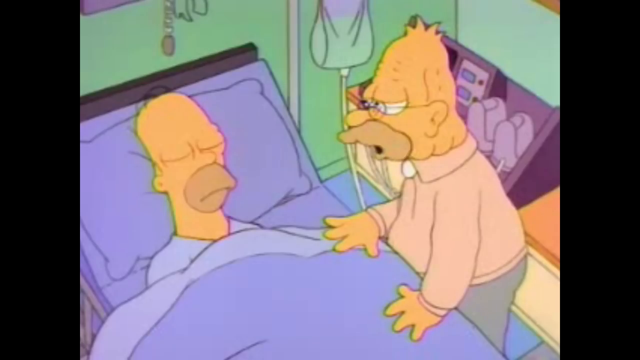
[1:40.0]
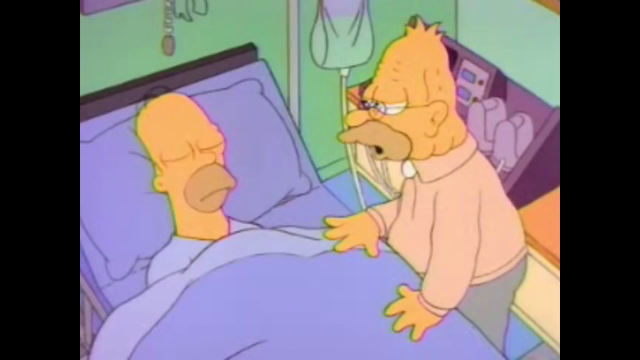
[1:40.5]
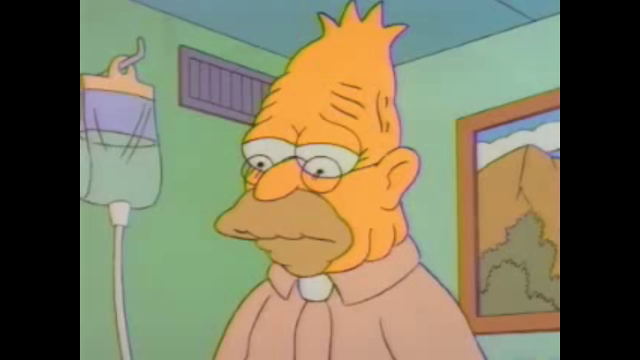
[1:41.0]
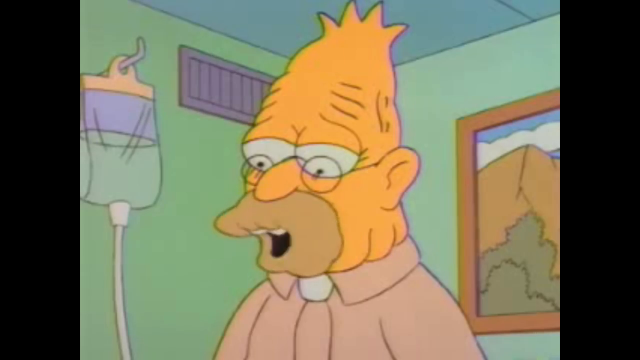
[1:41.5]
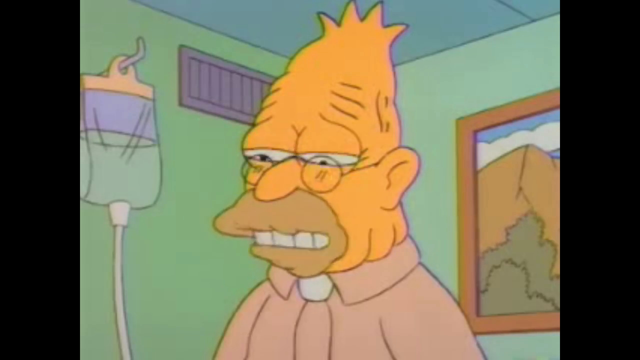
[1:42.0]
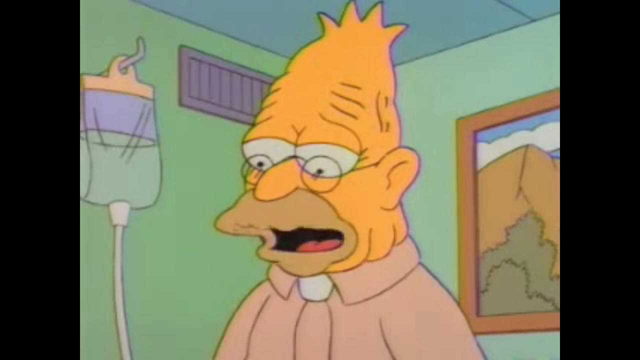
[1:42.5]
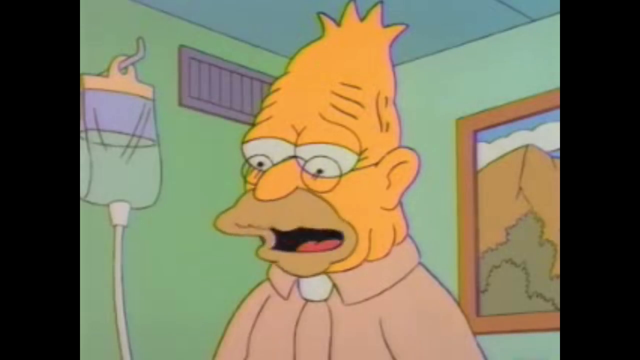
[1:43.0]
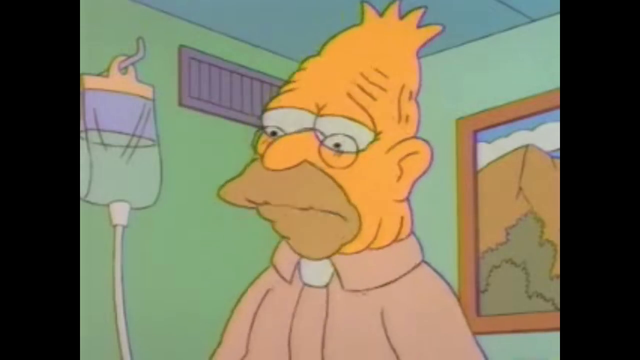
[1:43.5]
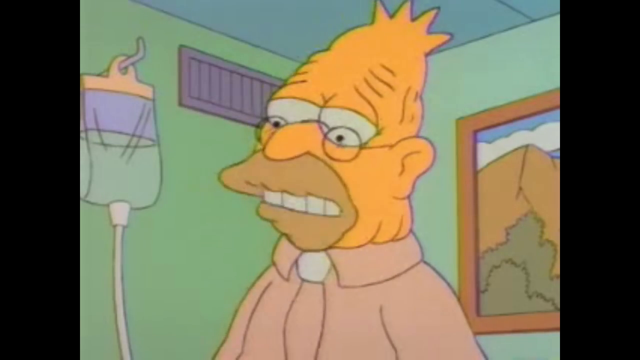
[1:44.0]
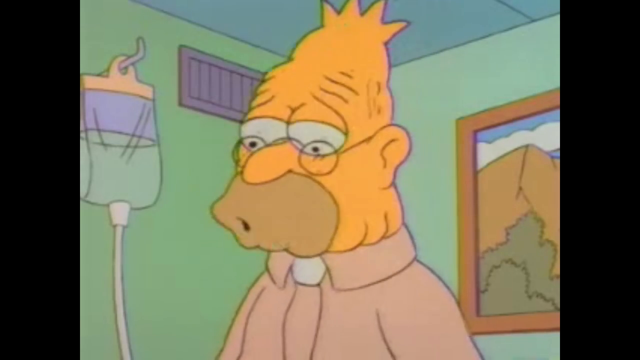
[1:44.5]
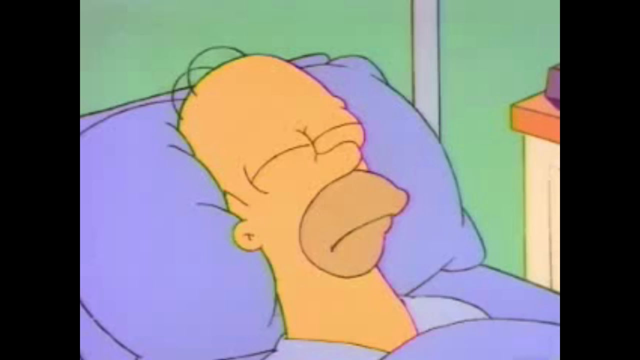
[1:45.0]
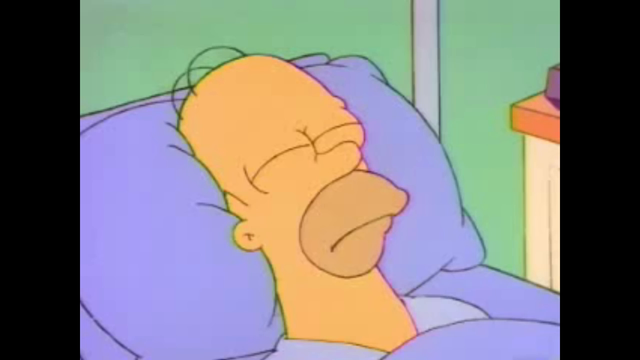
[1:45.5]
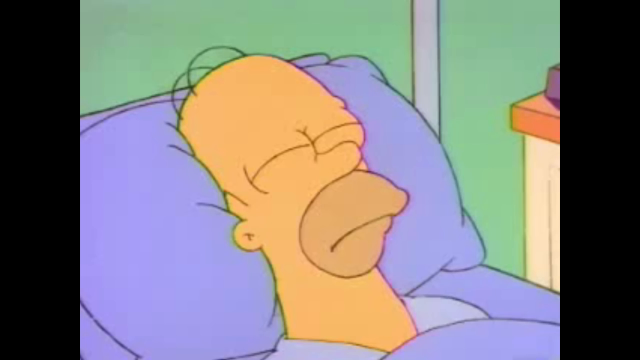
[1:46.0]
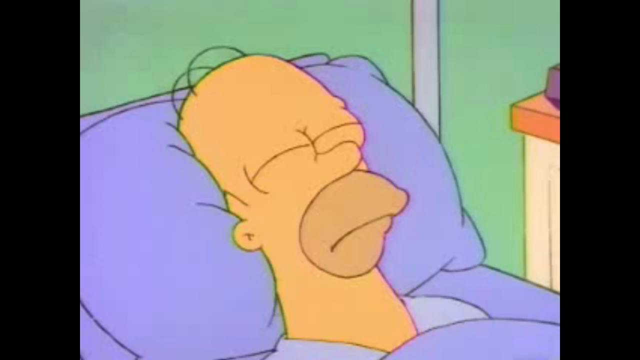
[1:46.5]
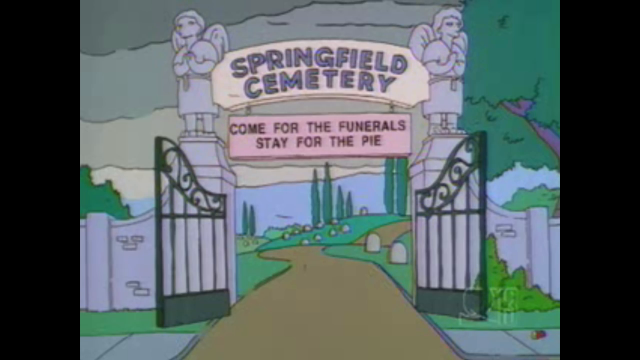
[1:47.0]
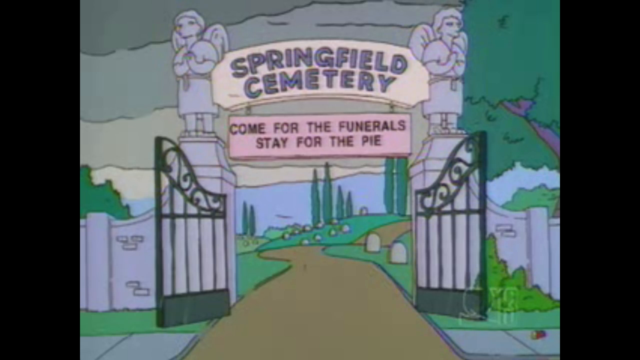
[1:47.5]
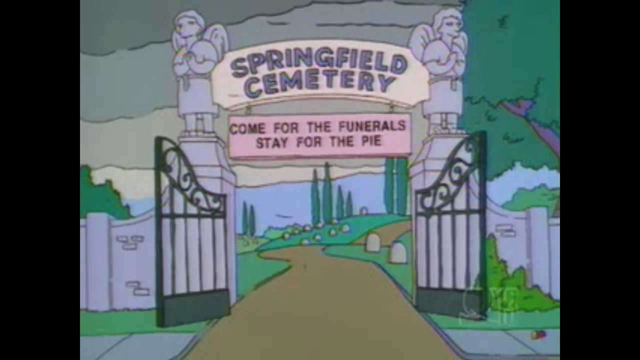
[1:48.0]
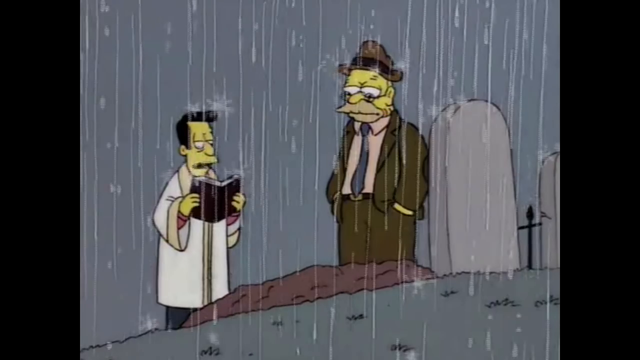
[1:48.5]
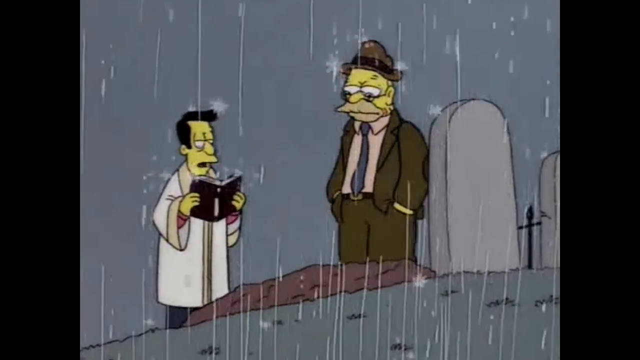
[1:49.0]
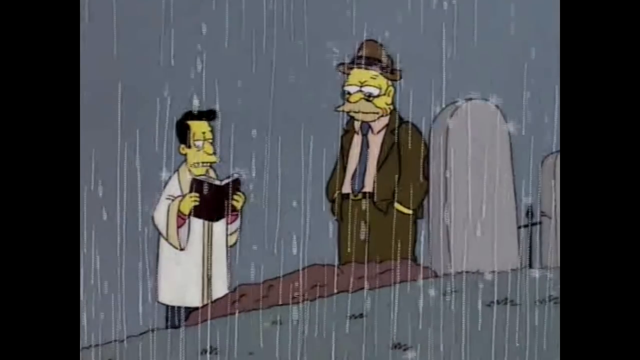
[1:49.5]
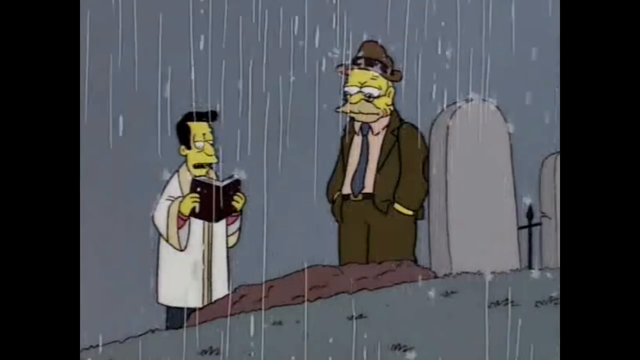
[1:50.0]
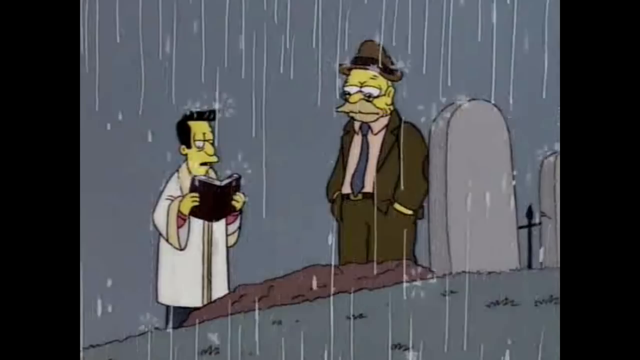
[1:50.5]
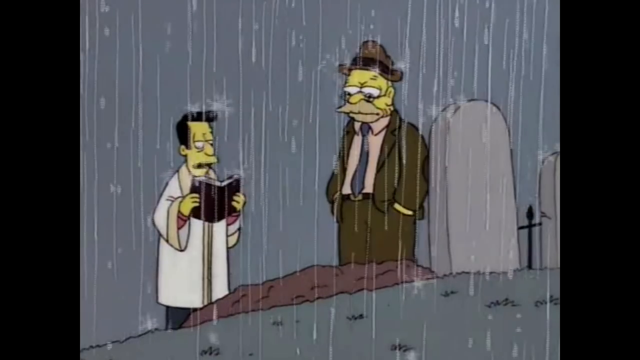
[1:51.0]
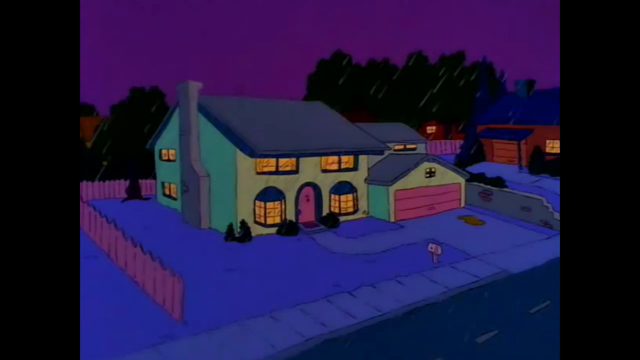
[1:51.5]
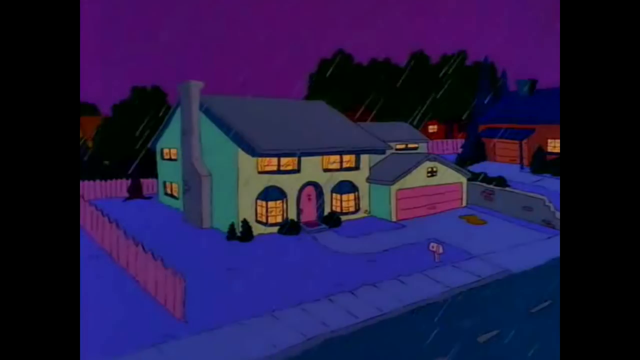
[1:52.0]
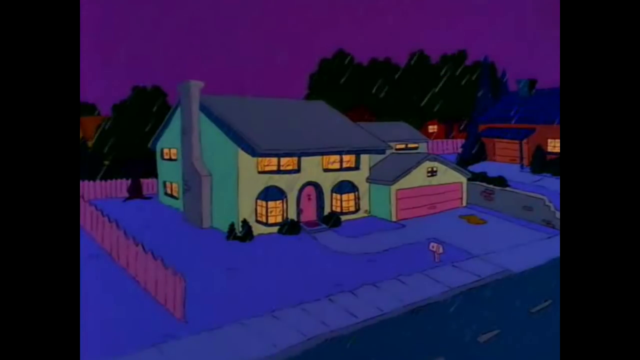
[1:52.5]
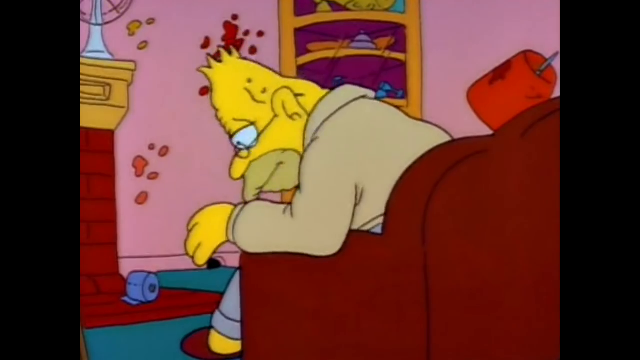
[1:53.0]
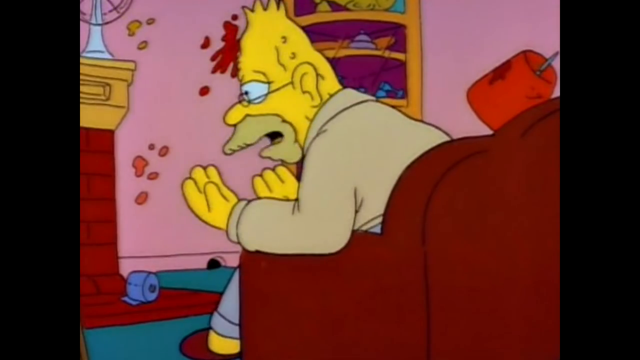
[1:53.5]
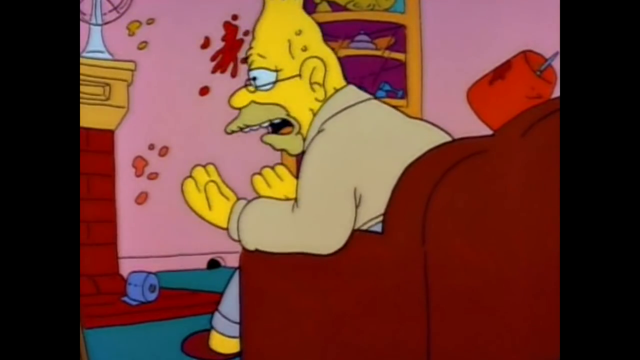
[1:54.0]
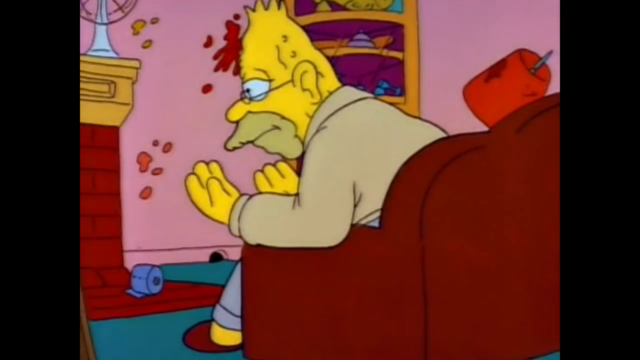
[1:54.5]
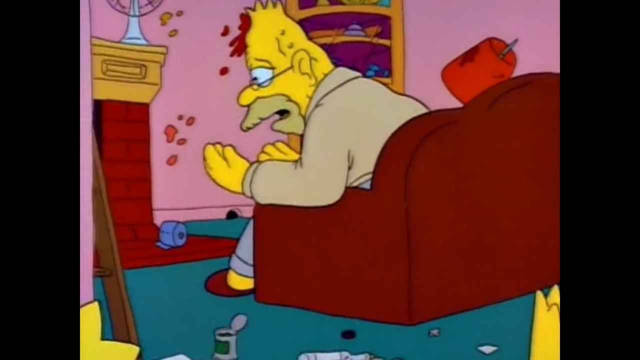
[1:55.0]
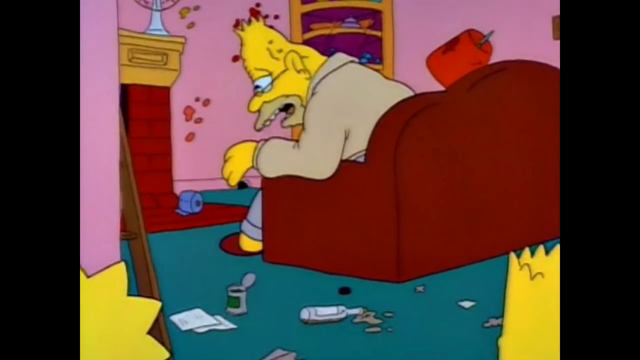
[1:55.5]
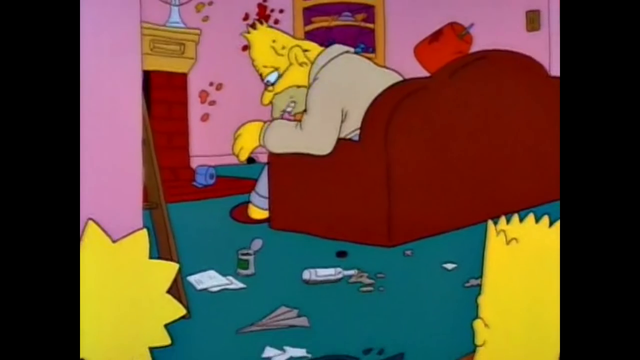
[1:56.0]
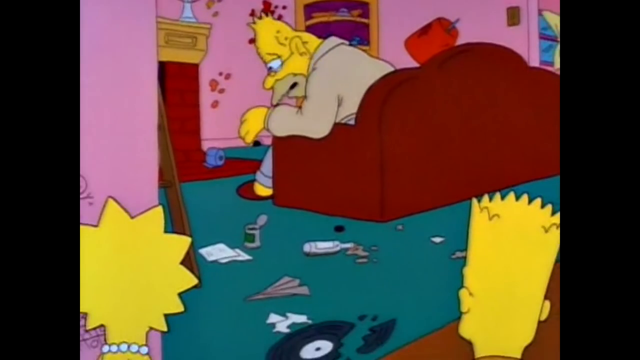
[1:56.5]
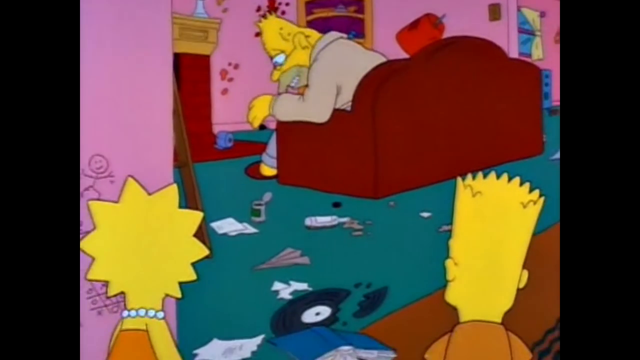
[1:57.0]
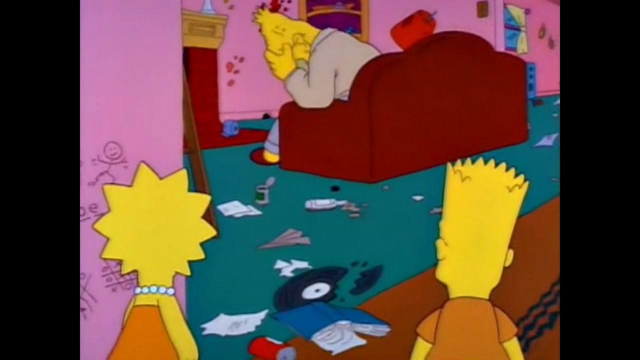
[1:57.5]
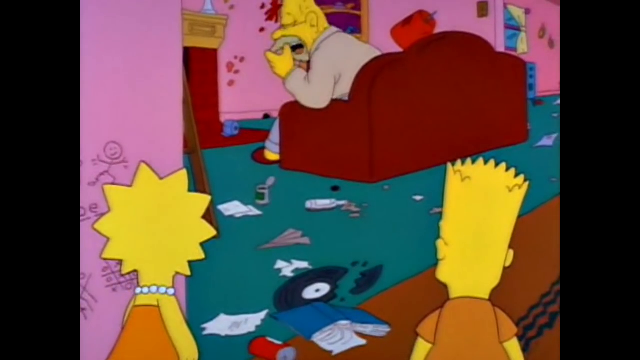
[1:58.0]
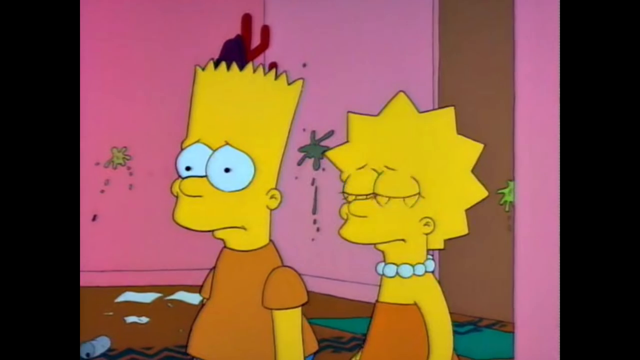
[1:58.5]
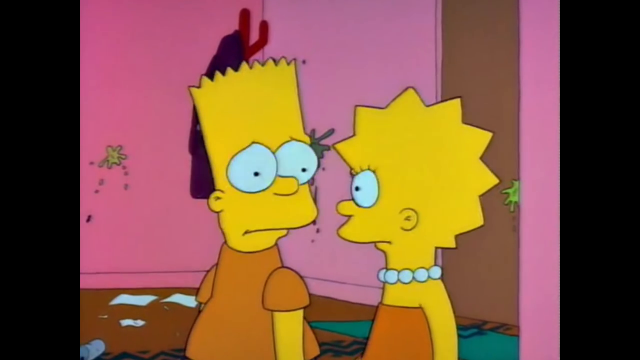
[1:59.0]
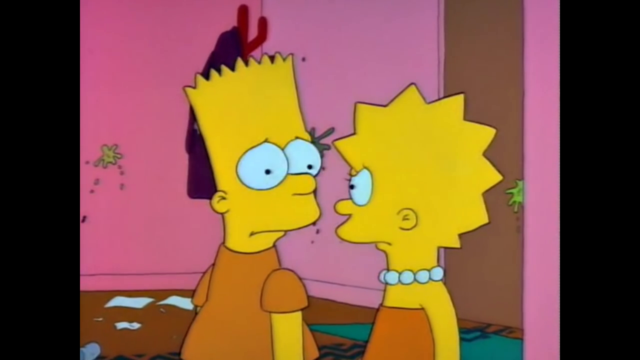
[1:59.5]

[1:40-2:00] Homer Simpson lies in a hospital bed with lavender sheets and a lavender-covered pillow. On the wall above the bed is a pinkish-purple device, with just the bottom of it and its cord hanging down barely visible. Homer's father stands beside the bed looking down, very distraught, wearing his glasses and a light pastel shirt. He talks to Homer, with stress and sadness in his eyes. He thinks back to the Springfield Cemetery, where he buried his wife many years ago. Then he goes home, and a scene shows him distraught and destroying everything he cares about, while family members, including Maggie, look in and witness this breakdown.